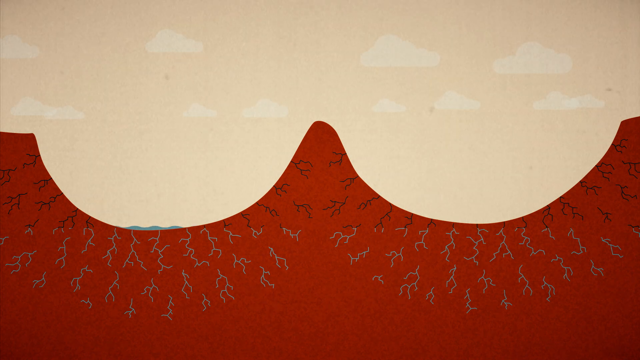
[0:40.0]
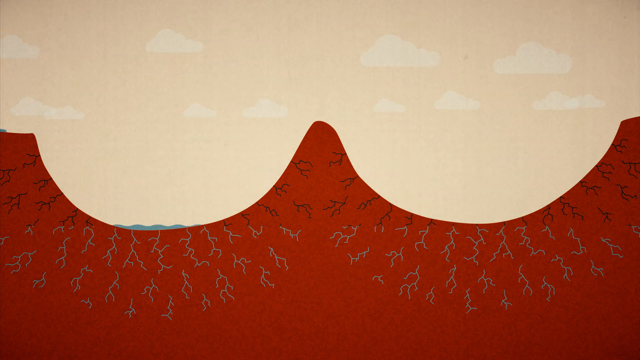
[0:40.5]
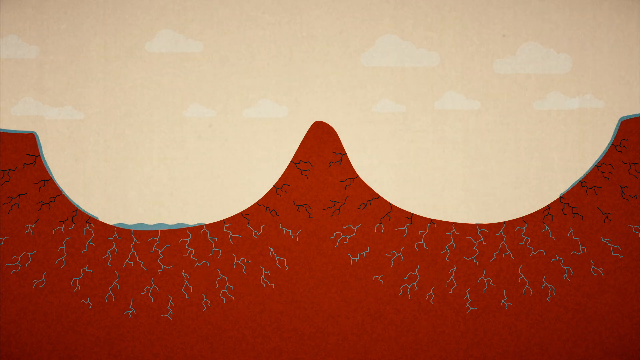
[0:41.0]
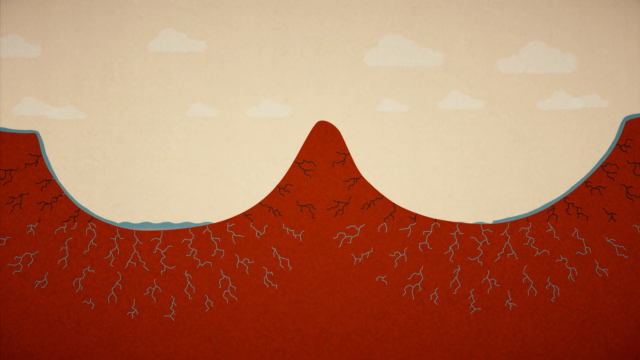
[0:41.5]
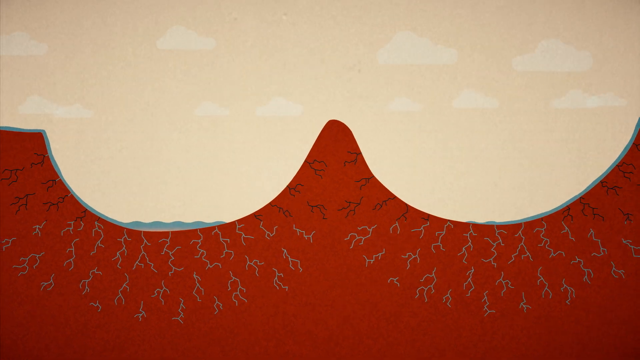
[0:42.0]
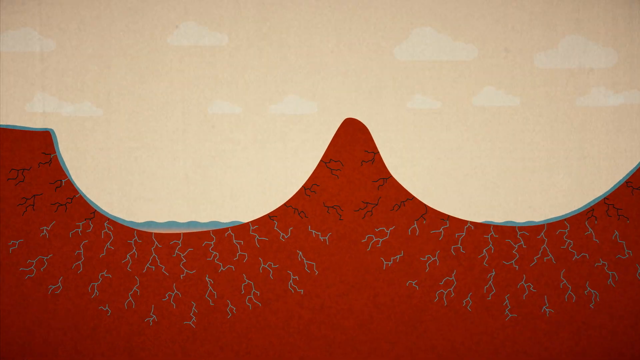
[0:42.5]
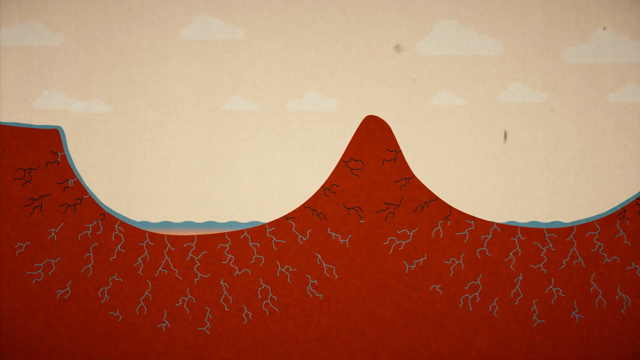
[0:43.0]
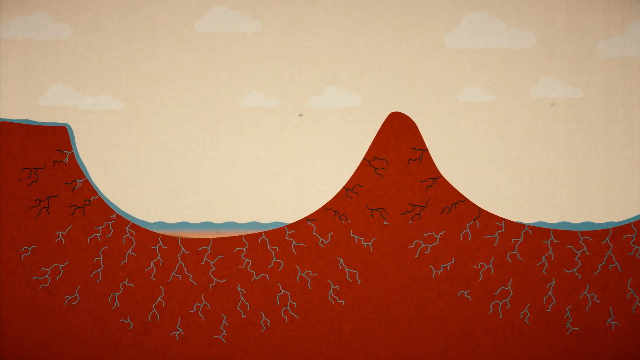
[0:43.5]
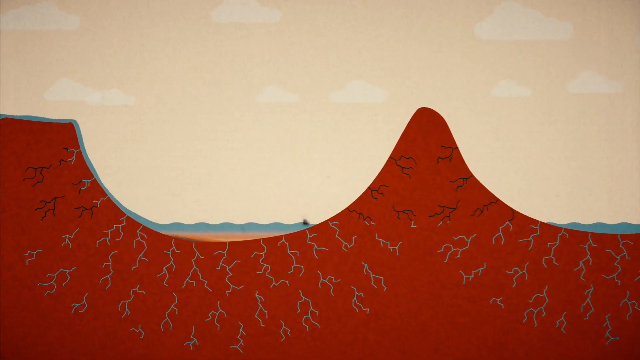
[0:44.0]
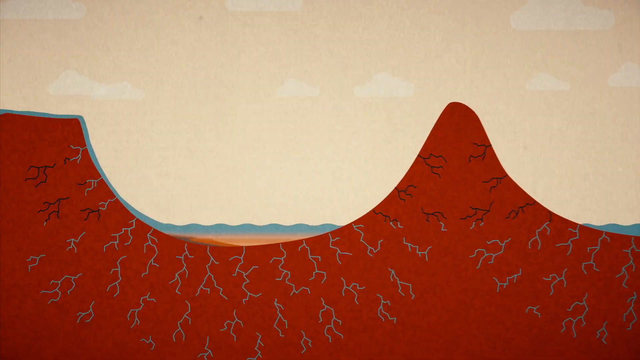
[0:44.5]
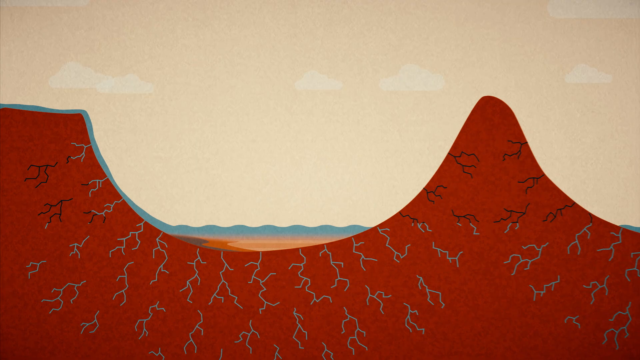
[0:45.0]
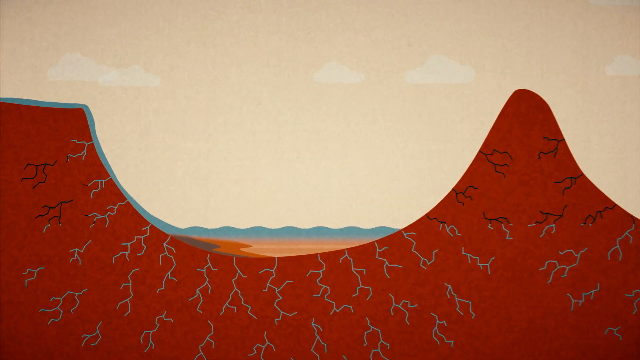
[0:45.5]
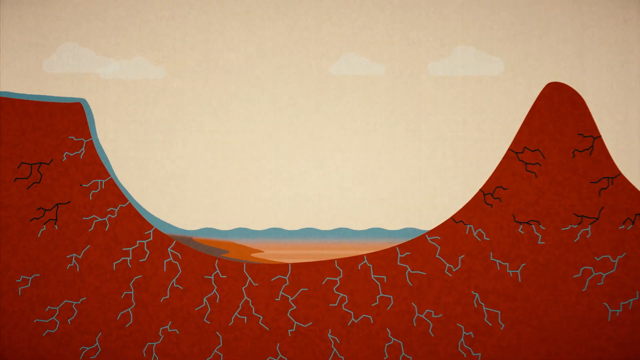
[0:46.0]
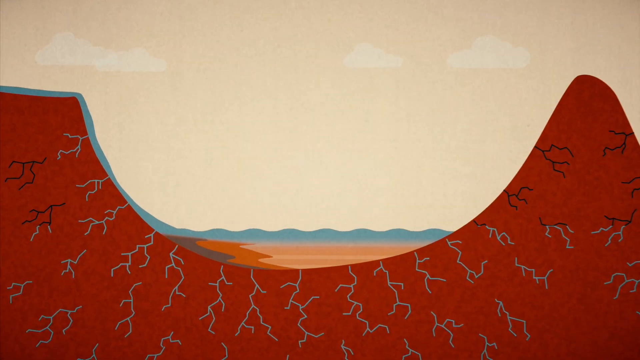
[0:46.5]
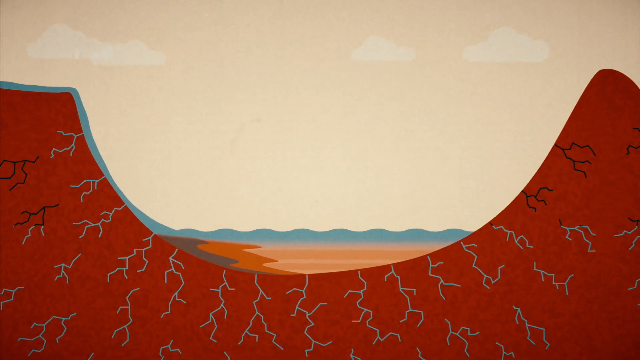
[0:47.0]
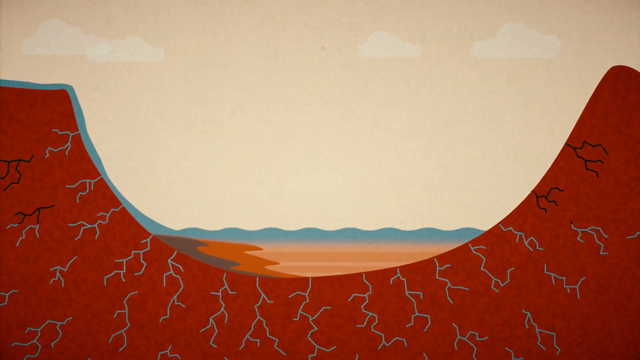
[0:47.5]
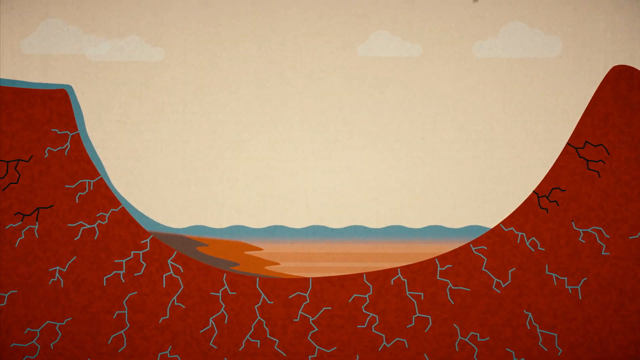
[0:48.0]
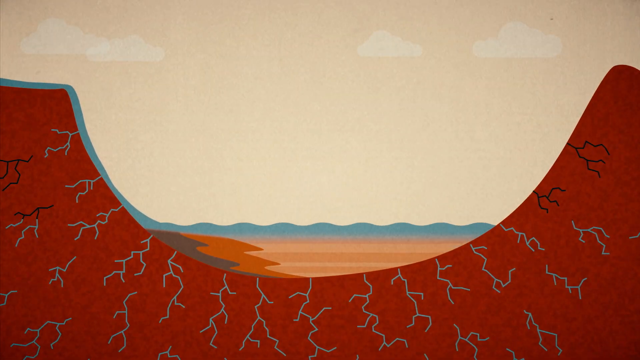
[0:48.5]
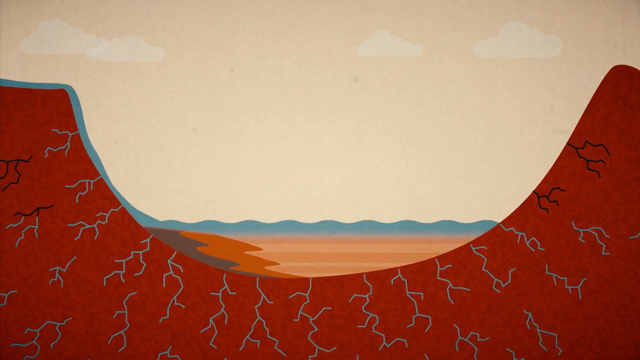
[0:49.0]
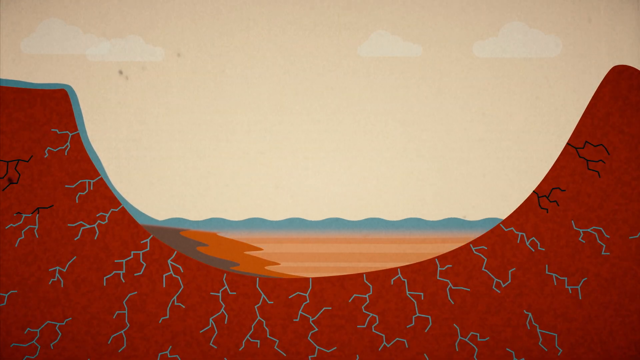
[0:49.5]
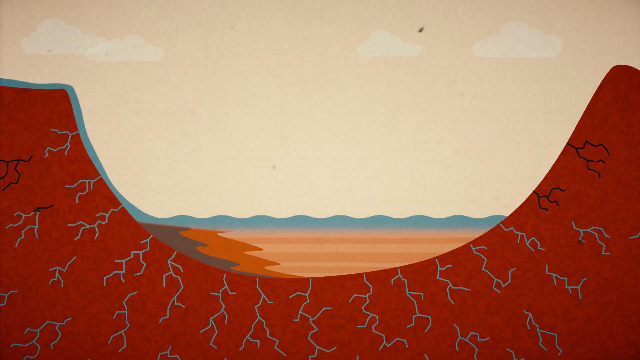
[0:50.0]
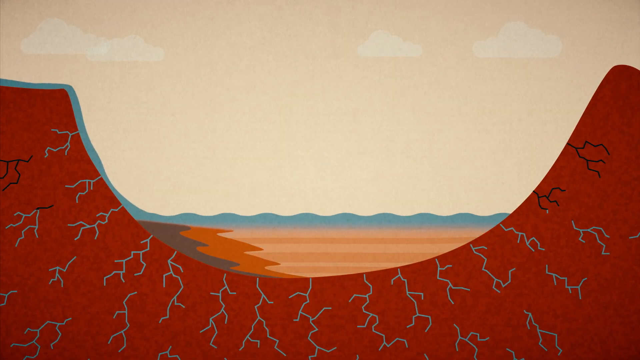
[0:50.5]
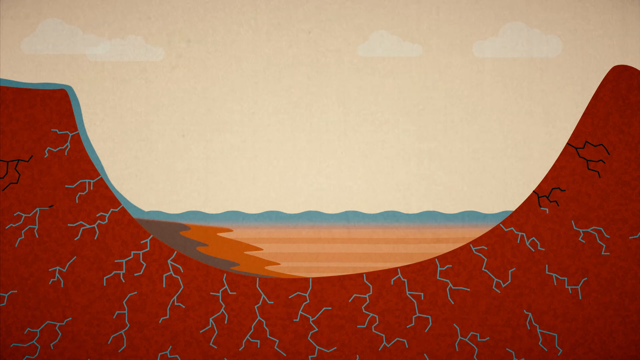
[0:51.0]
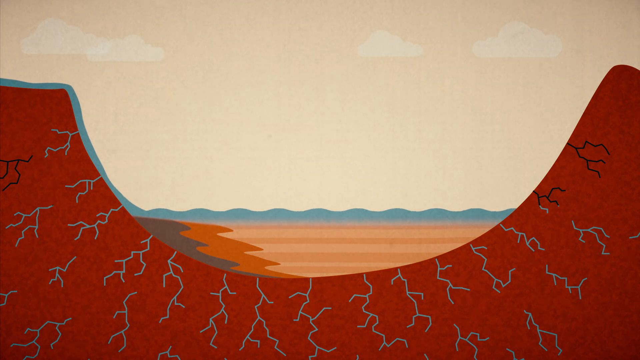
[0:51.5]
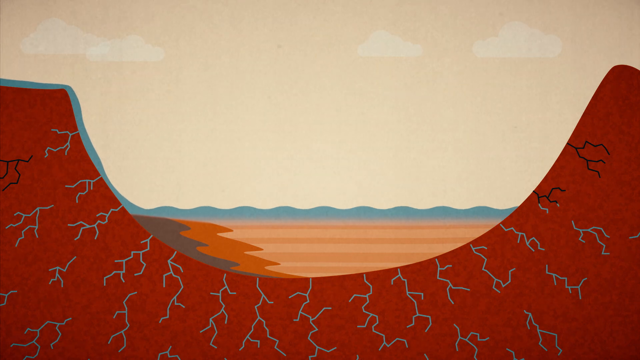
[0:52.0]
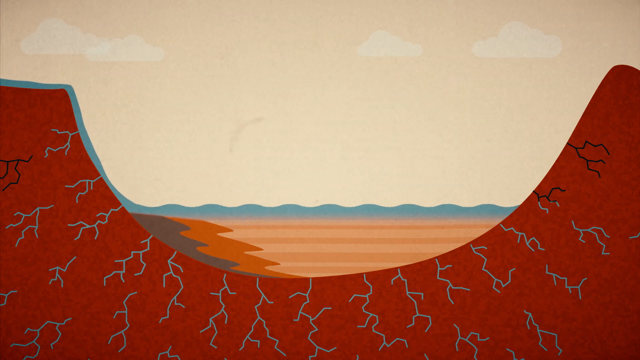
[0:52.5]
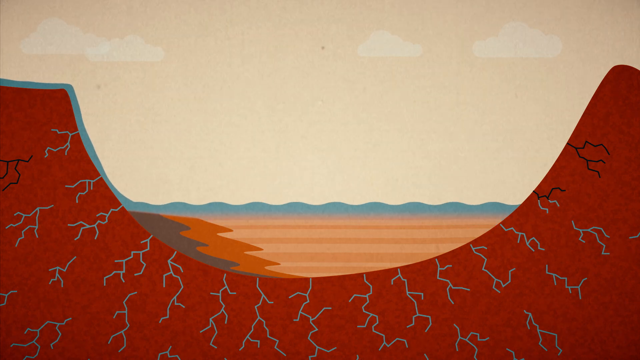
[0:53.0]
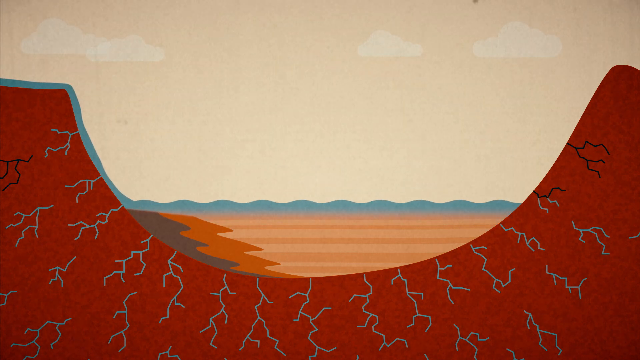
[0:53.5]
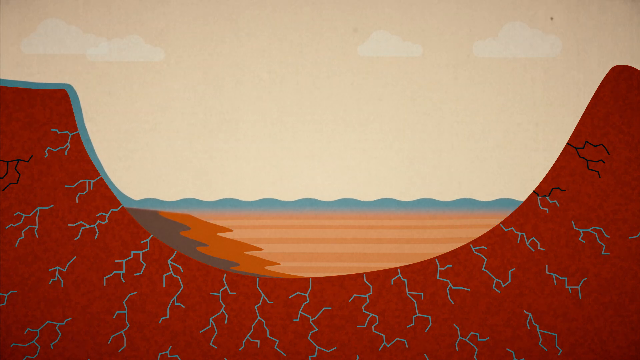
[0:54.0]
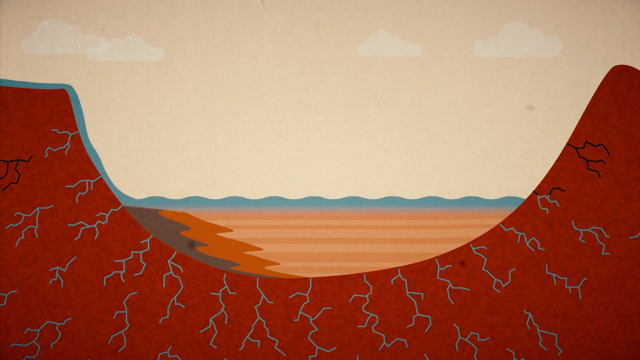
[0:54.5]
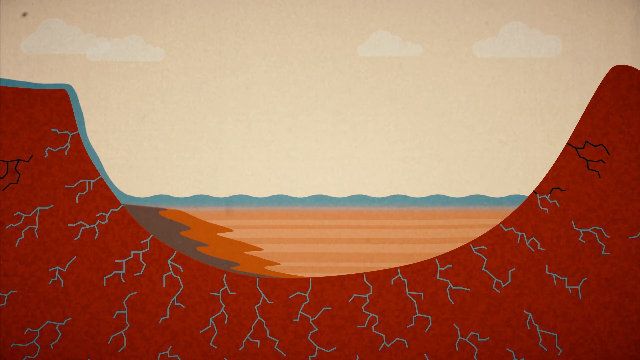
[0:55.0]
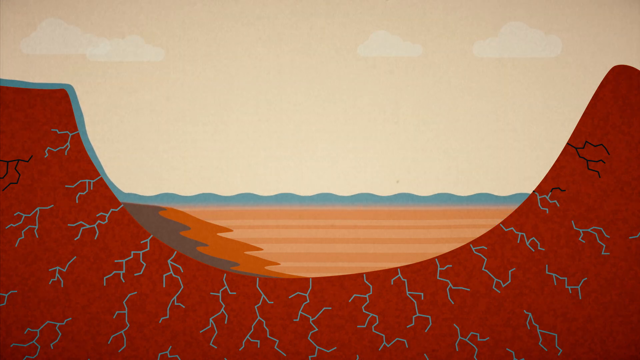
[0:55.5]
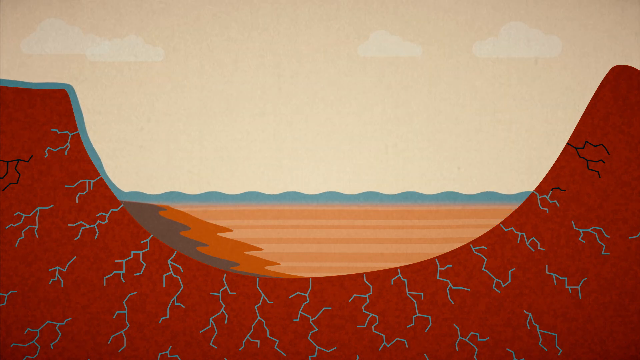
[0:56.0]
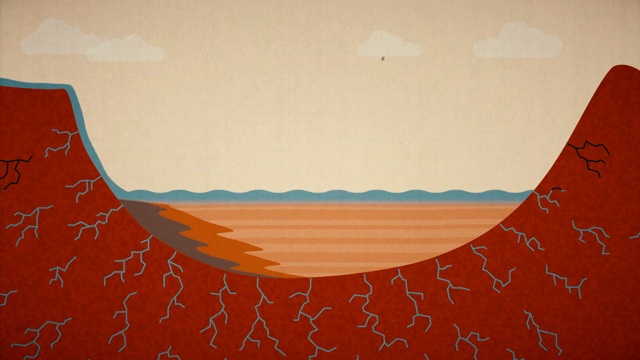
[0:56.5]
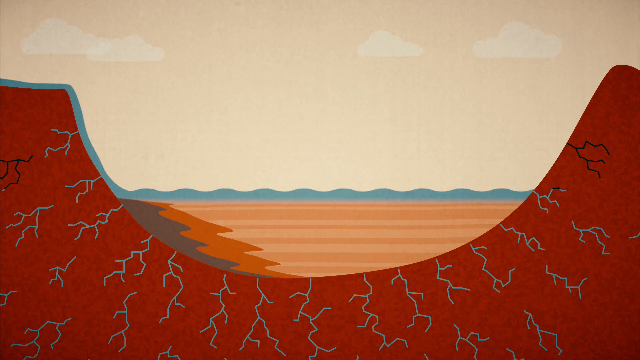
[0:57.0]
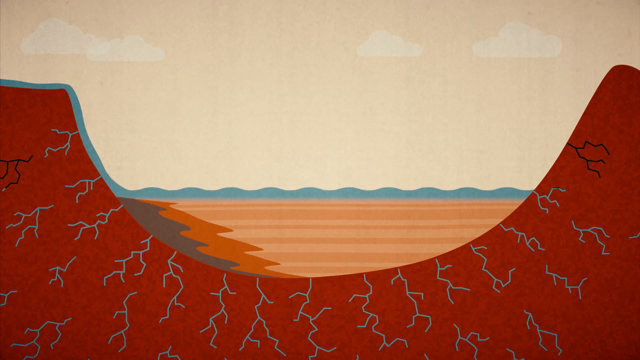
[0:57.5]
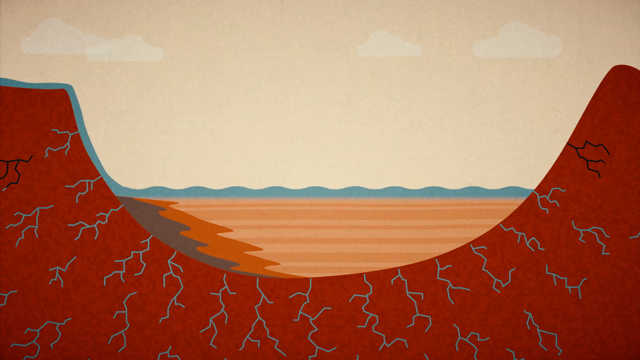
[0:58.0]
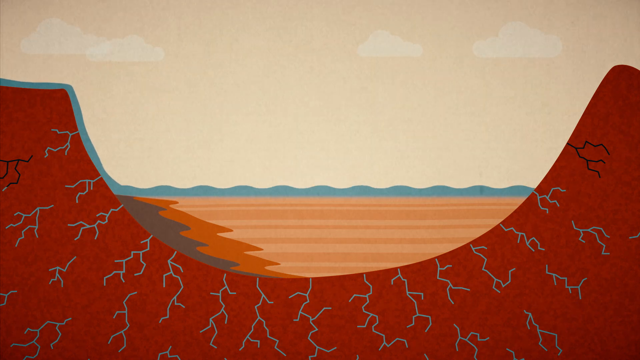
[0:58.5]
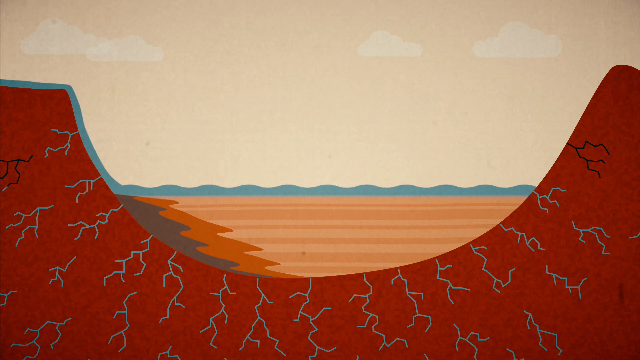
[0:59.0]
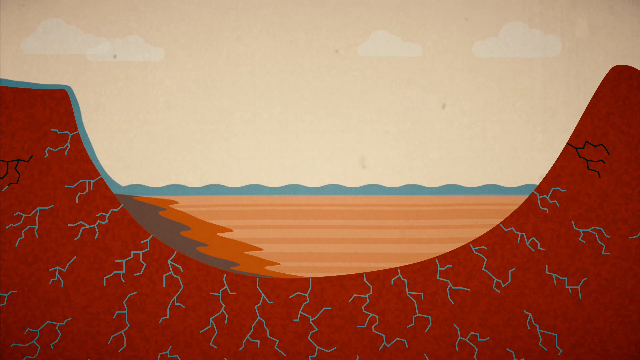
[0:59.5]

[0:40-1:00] The animation of the formation of Gale's Crater continues, with both craters filling up with what appears to be water. The crater on the left side is the one the view zooms in on and focuses on. As it sort of fills with water, liquid or sand, material and sediment form underneath a wavy, blue waterline. The sediment is more kind of reddish brown on the left-center side, maybe thicker or denser sediment, and next to that, on the far left side, it is more dark gray, either a different sediment type or perhaps more saturated with water than the lighter tones filling the crater. On the right side of the screen, root-like cracks fill up as the waterline rises. The water streams in on the left side, starting at maybe the top third of the screen and flowing into the curving depression of the crater.